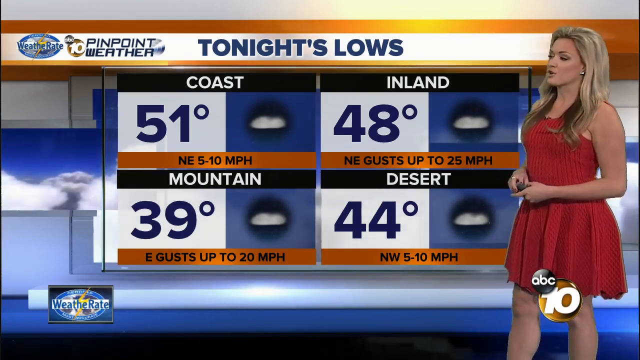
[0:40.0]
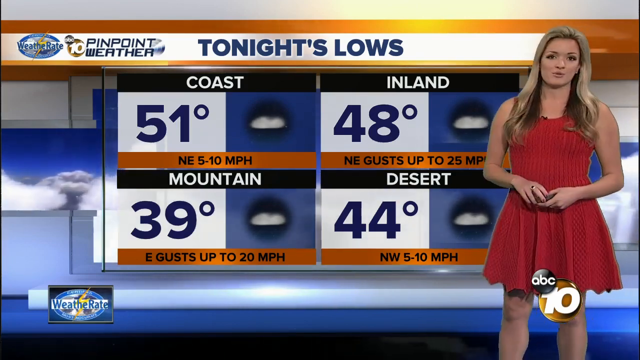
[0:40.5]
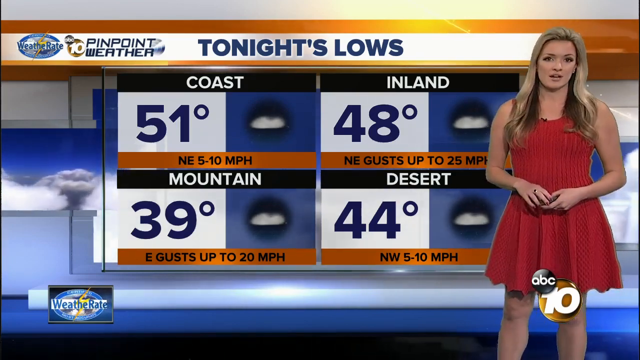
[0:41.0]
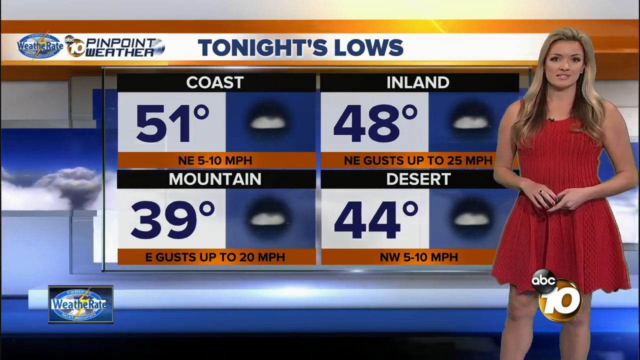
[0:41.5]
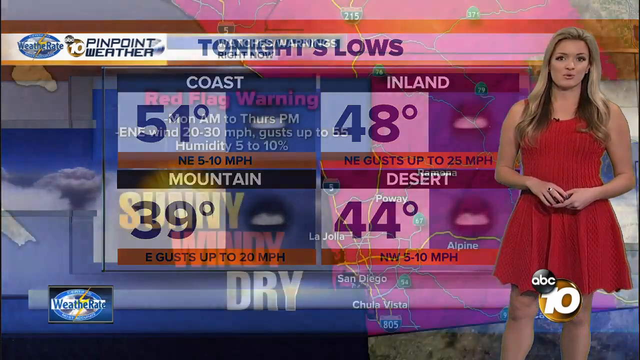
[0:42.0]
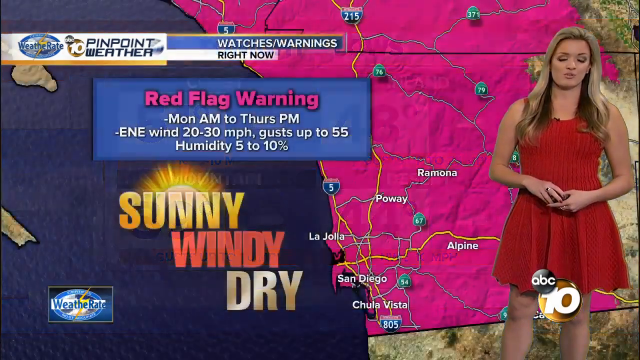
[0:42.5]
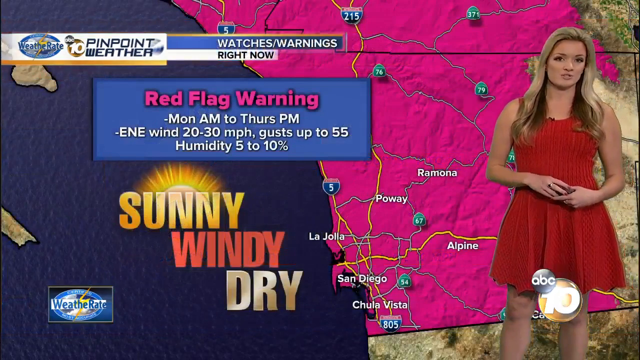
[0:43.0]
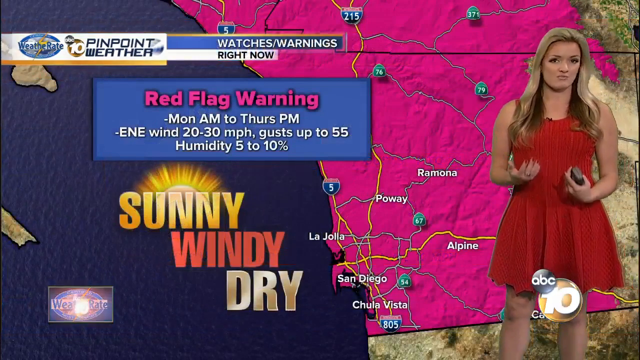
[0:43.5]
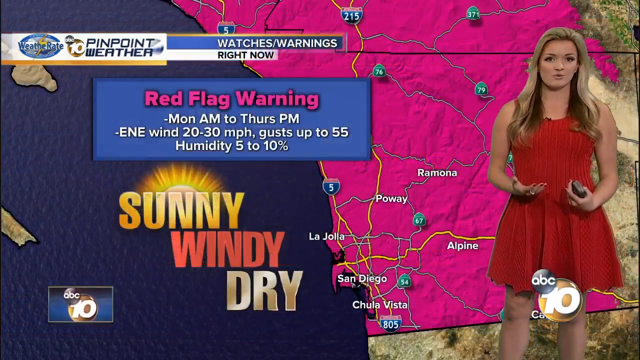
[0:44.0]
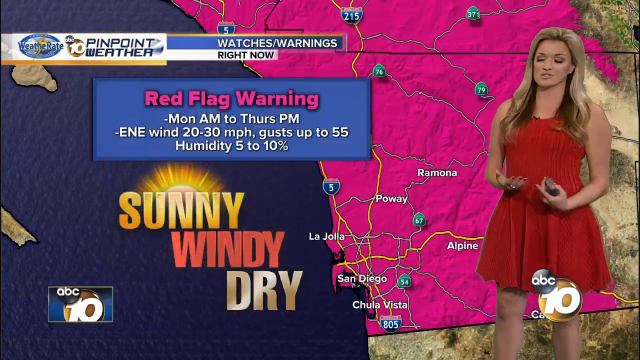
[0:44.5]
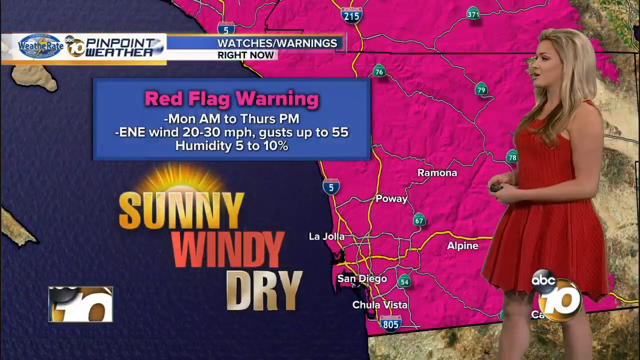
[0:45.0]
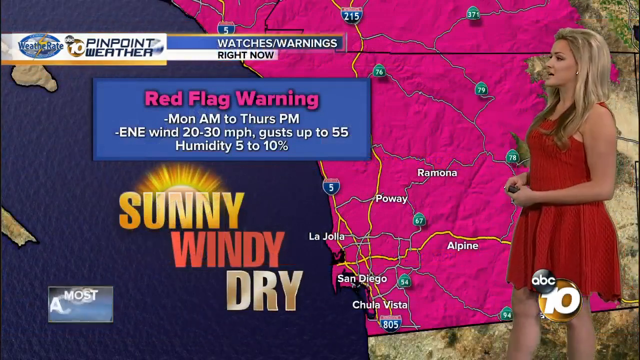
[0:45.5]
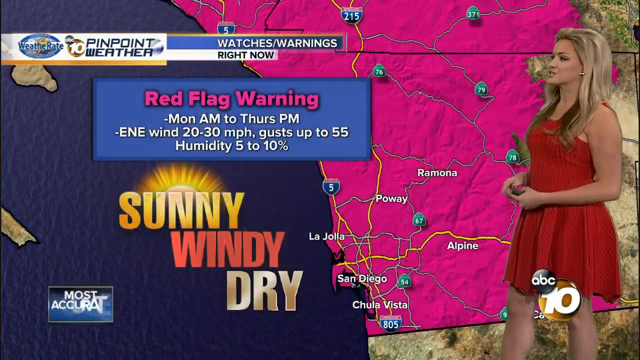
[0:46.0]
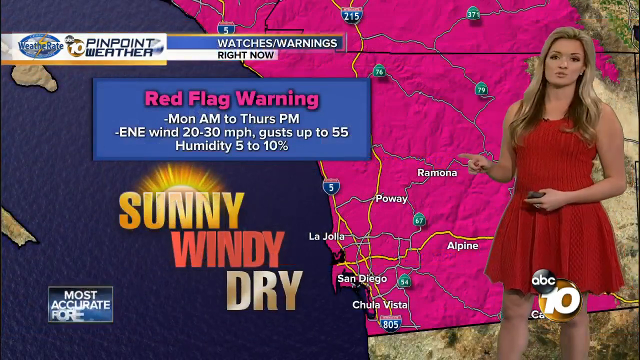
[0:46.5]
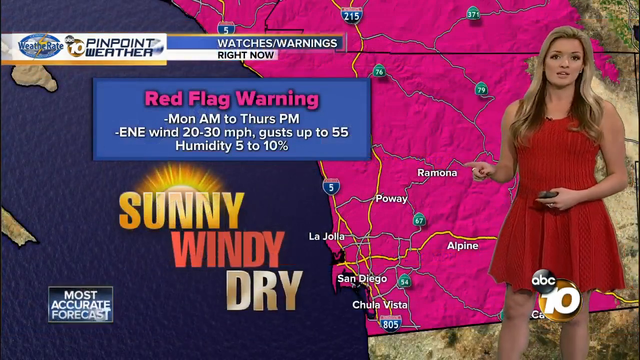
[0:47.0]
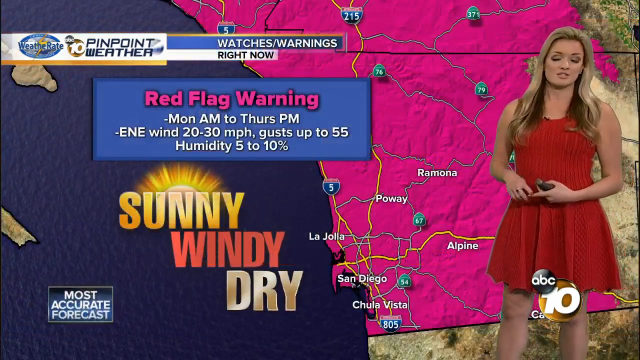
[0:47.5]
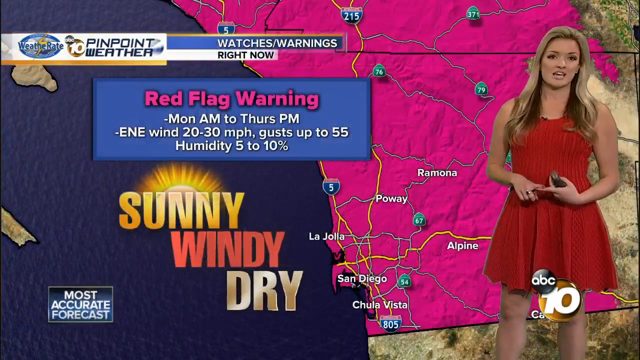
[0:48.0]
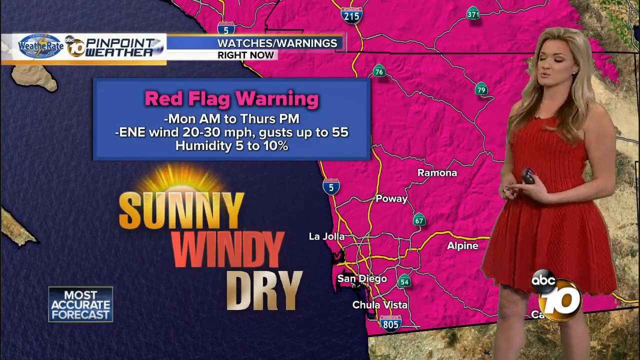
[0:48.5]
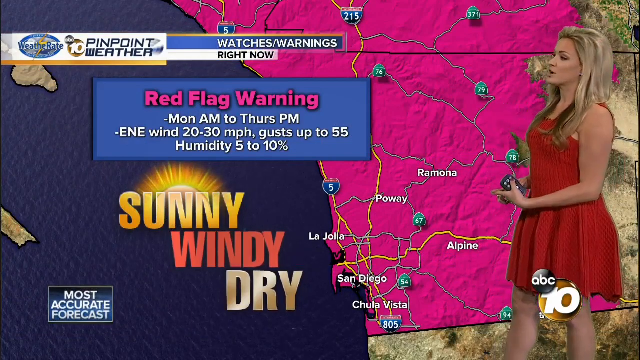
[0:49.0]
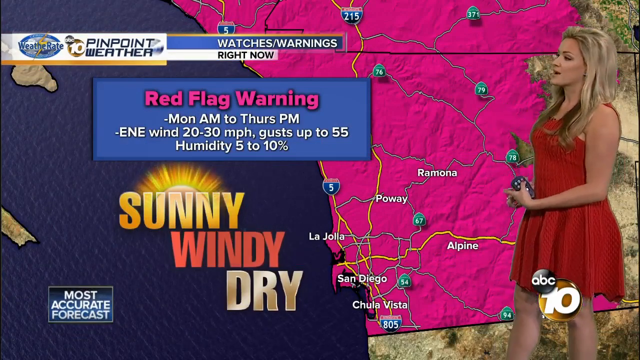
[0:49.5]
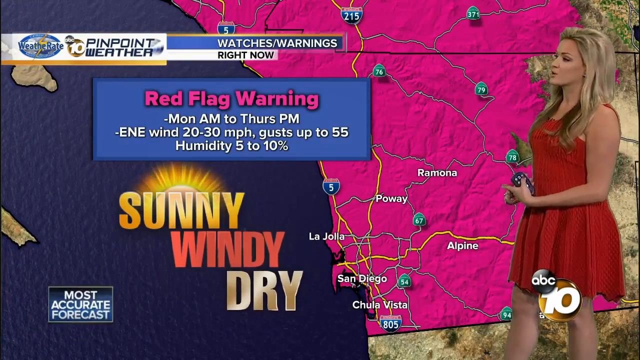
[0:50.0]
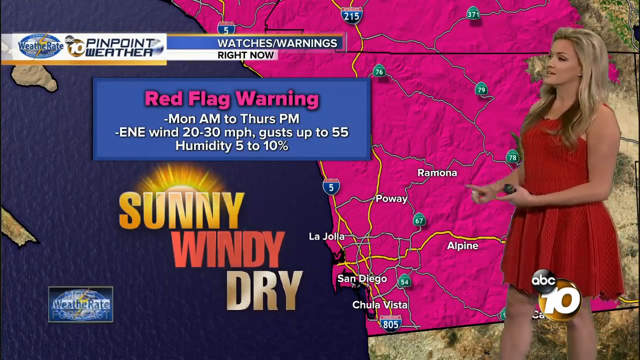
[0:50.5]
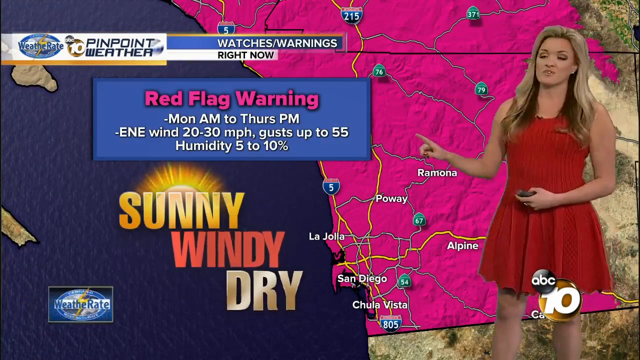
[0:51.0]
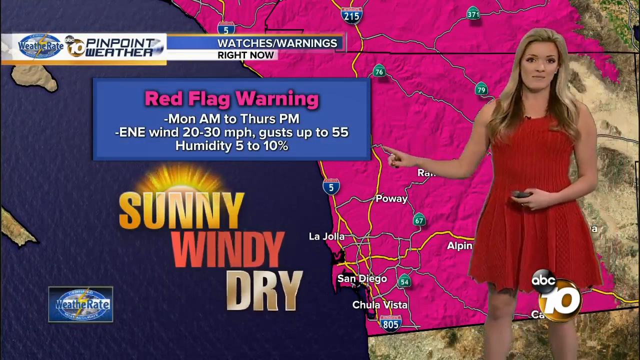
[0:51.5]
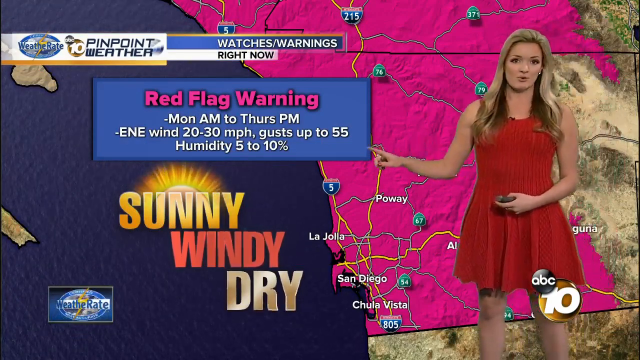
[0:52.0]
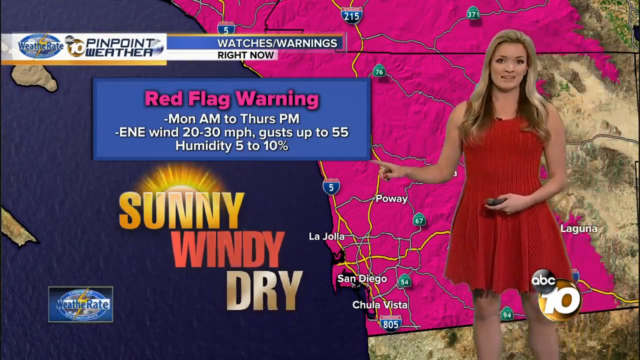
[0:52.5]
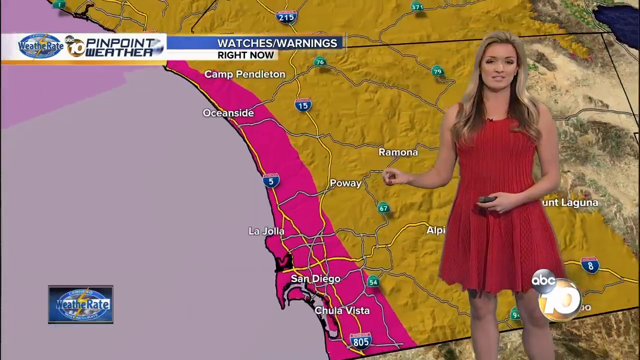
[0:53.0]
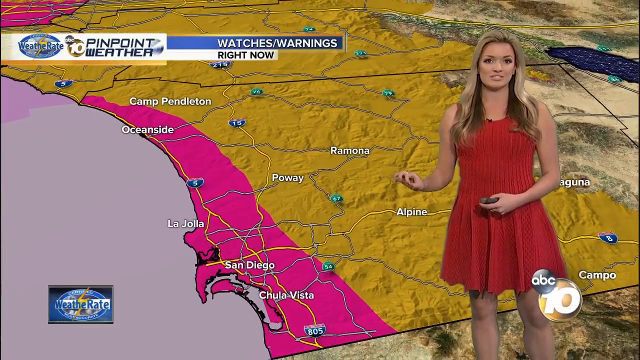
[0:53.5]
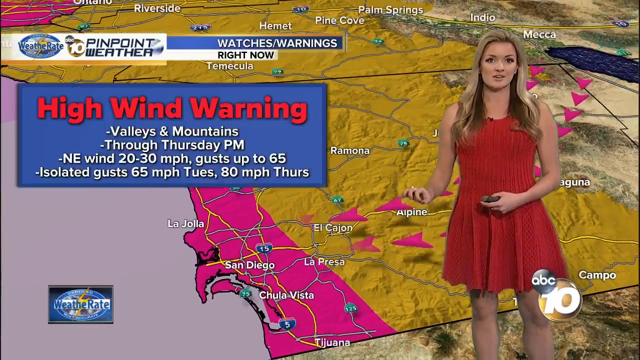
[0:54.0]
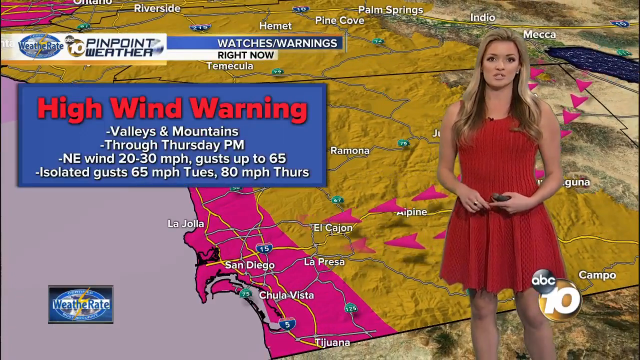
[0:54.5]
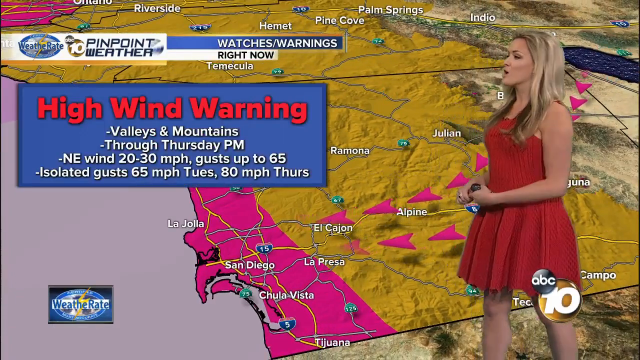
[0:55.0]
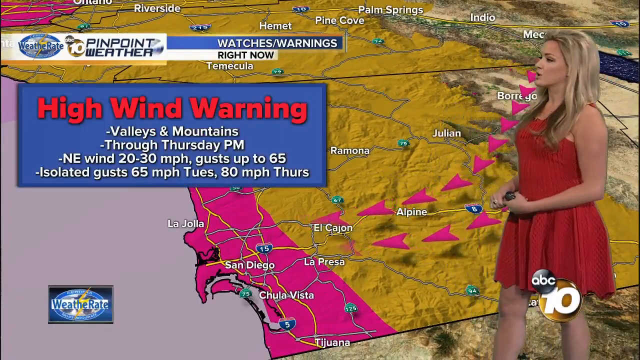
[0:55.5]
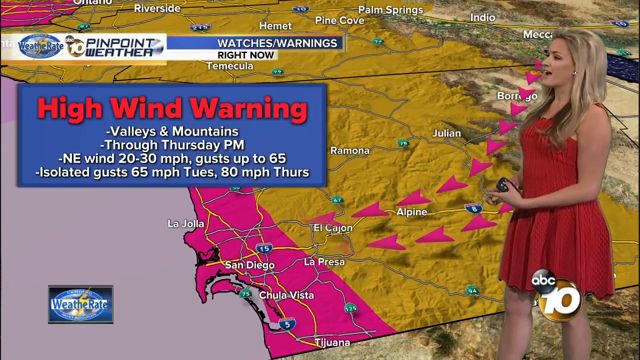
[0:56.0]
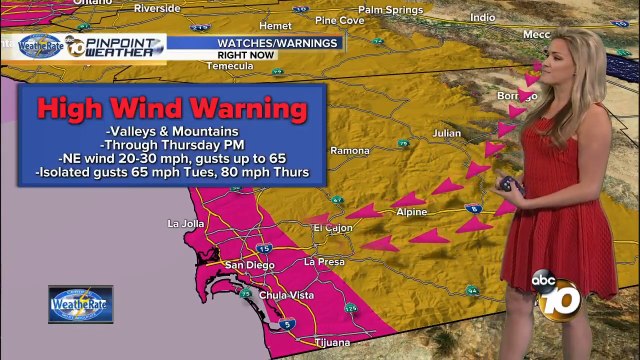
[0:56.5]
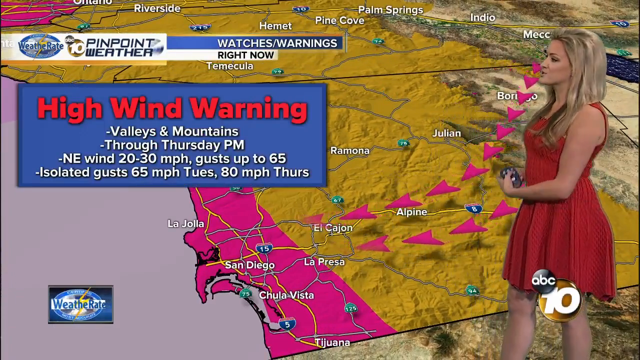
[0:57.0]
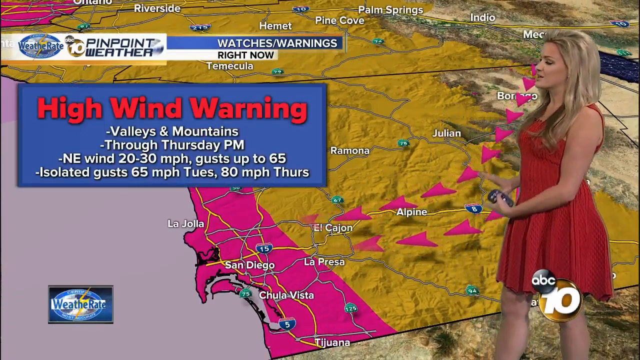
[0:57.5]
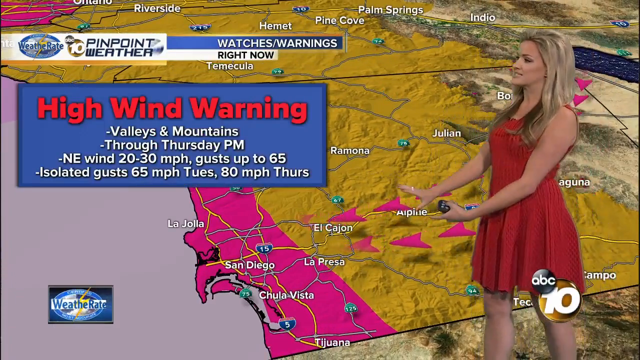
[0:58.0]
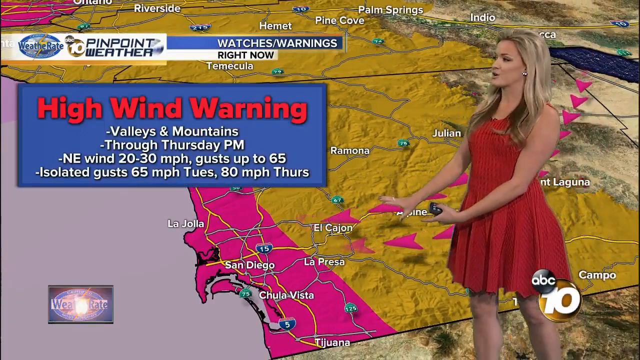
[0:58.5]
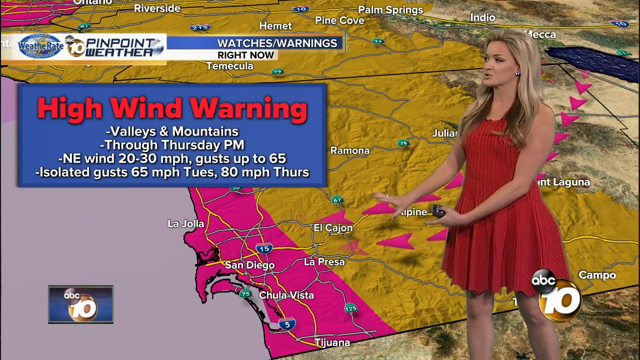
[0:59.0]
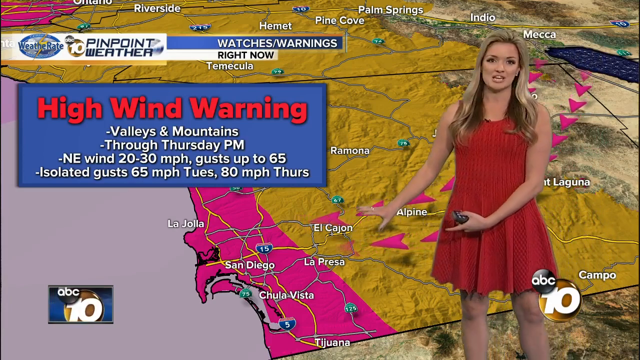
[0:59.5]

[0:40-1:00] A lady in a red dress explains what is shown on the screen. A map shows a red flag warning over some areas and a brown area, with arrows. The tonight's lows chart shows the coast at 51 degrees, inland at 48 degrees, the mountains at 39 degrees and the desert at 44 degrees. "Pinpoint weather" is written on the screen.